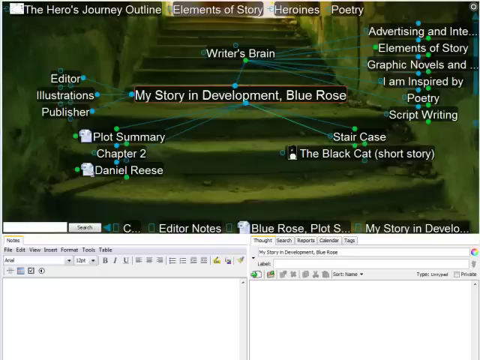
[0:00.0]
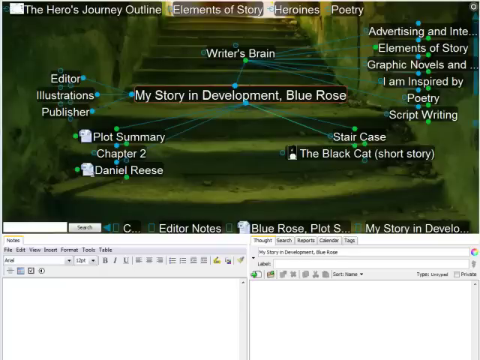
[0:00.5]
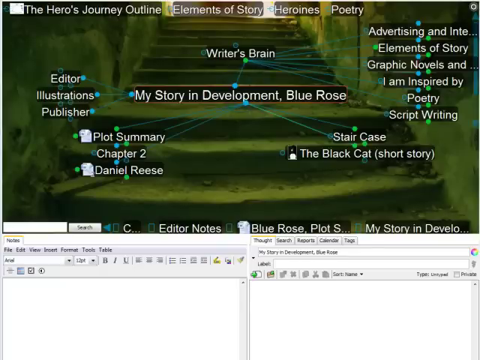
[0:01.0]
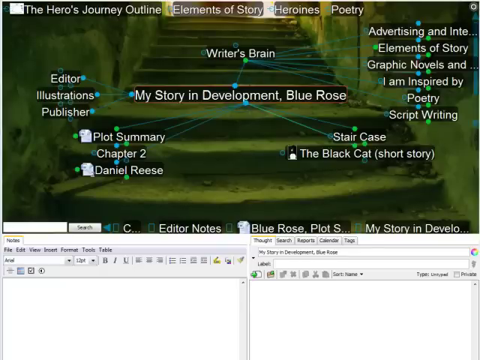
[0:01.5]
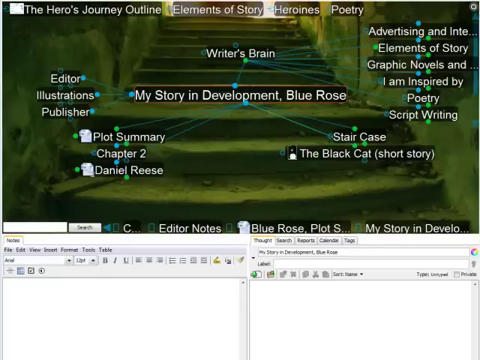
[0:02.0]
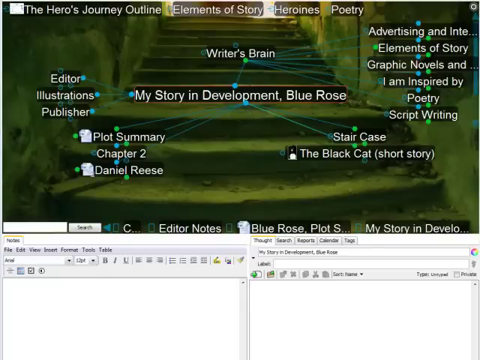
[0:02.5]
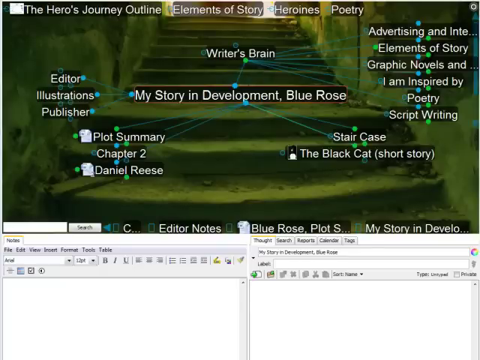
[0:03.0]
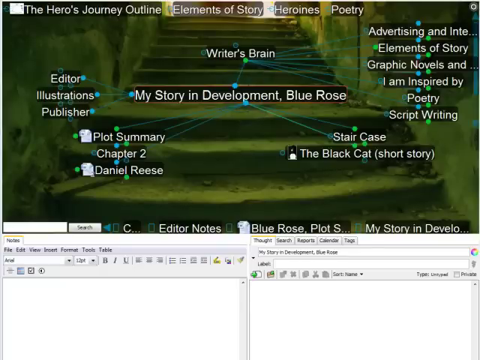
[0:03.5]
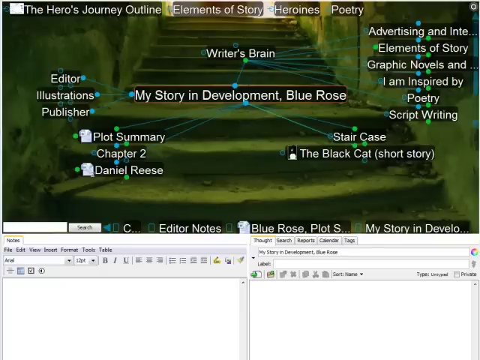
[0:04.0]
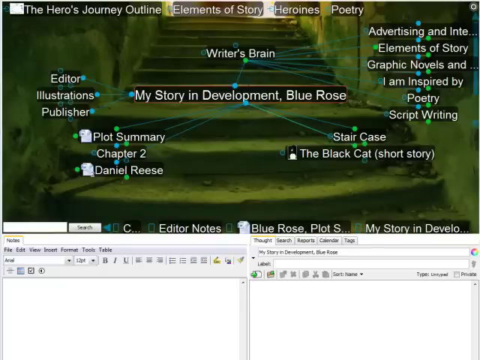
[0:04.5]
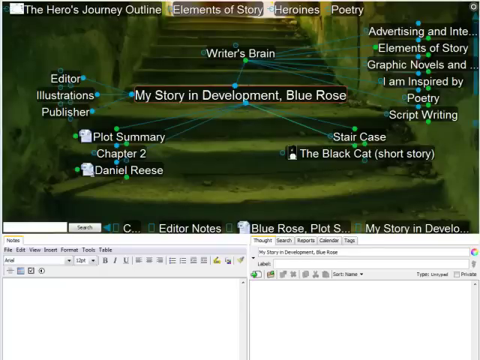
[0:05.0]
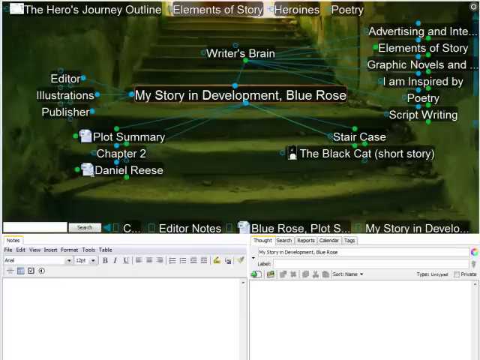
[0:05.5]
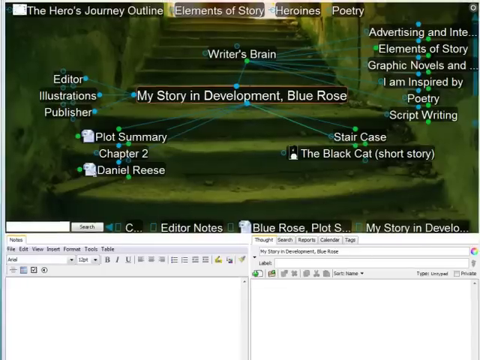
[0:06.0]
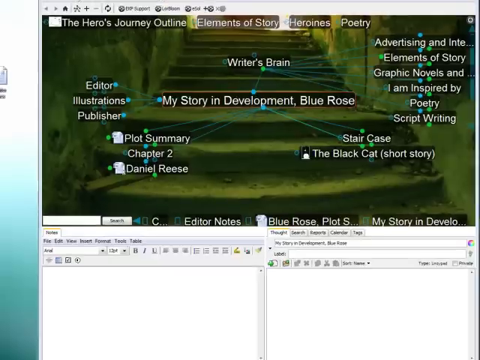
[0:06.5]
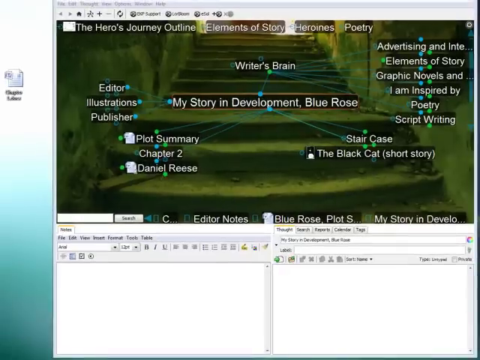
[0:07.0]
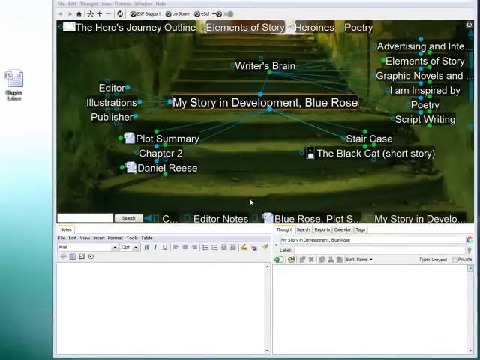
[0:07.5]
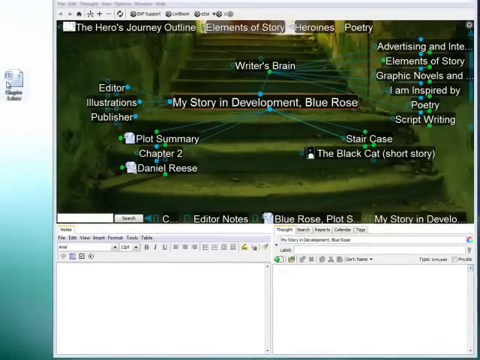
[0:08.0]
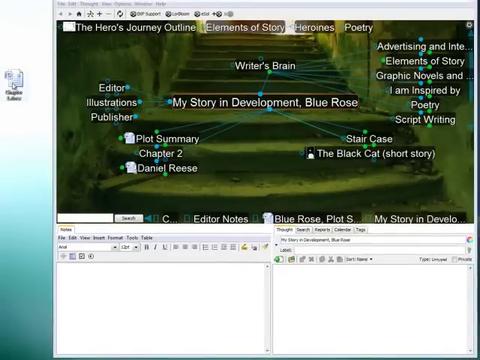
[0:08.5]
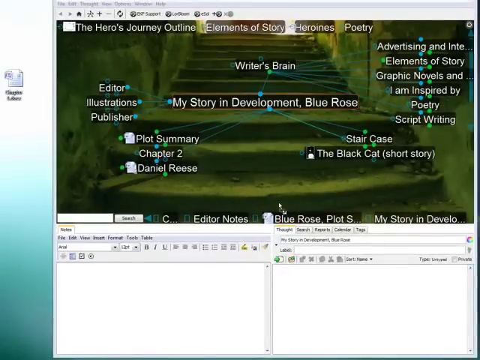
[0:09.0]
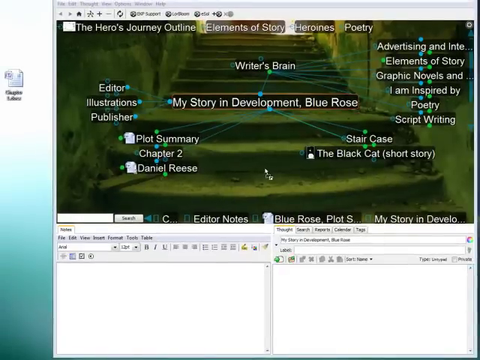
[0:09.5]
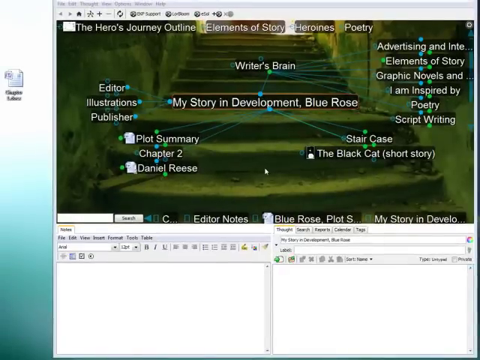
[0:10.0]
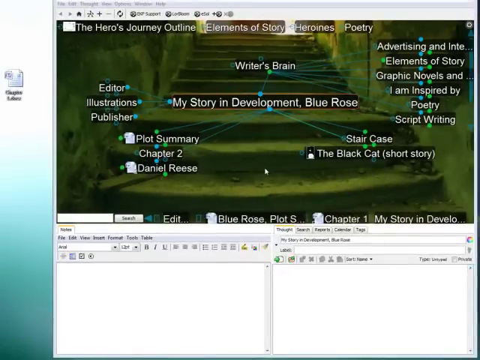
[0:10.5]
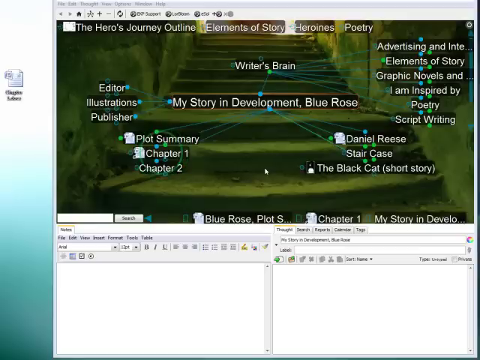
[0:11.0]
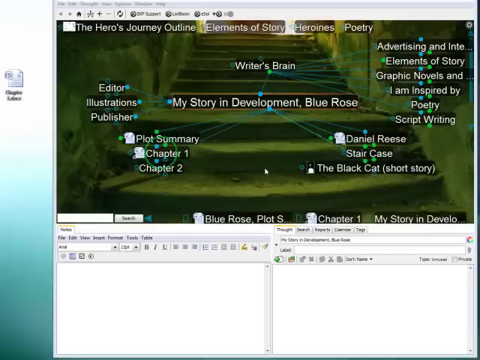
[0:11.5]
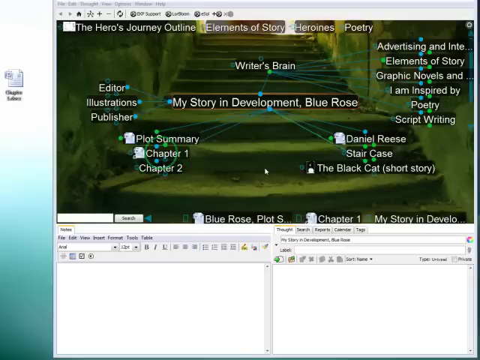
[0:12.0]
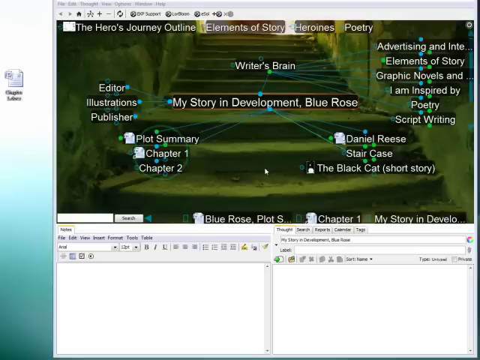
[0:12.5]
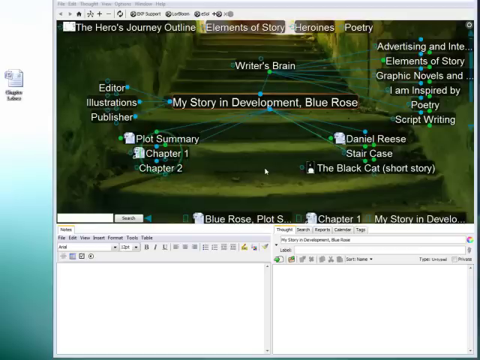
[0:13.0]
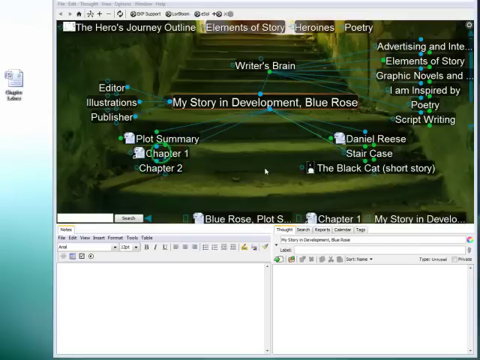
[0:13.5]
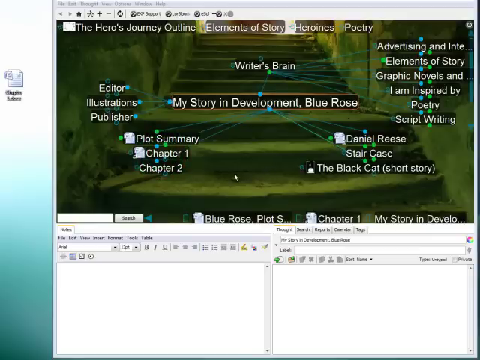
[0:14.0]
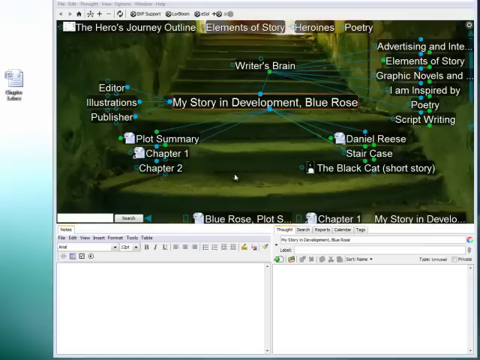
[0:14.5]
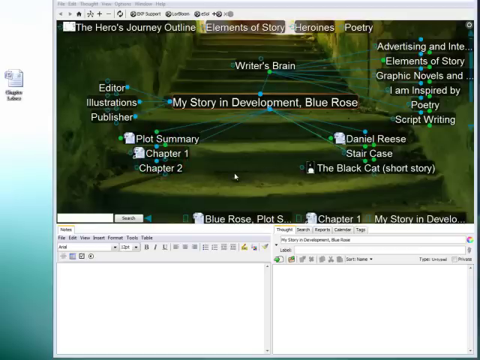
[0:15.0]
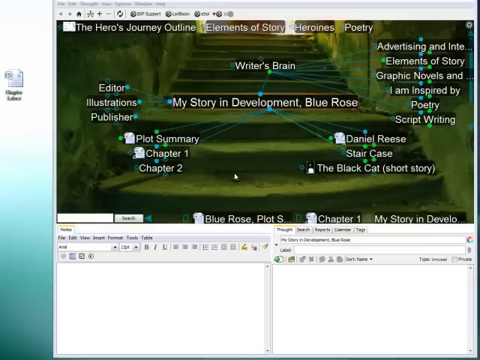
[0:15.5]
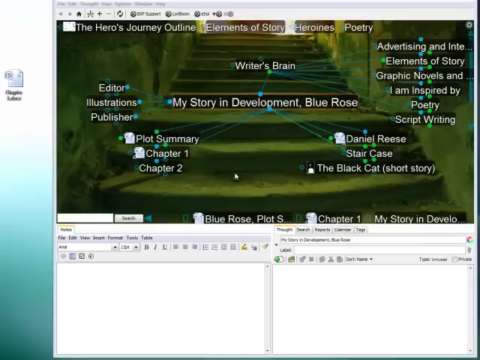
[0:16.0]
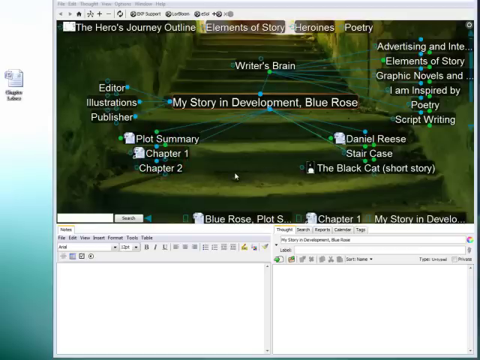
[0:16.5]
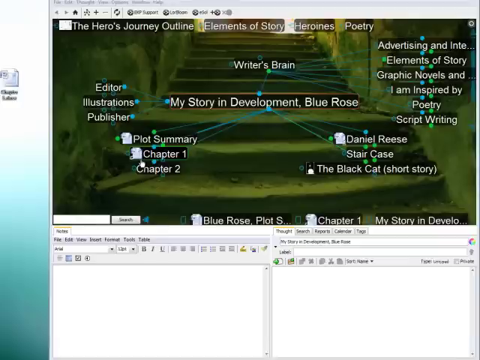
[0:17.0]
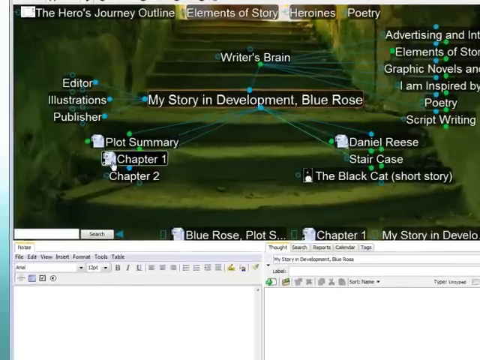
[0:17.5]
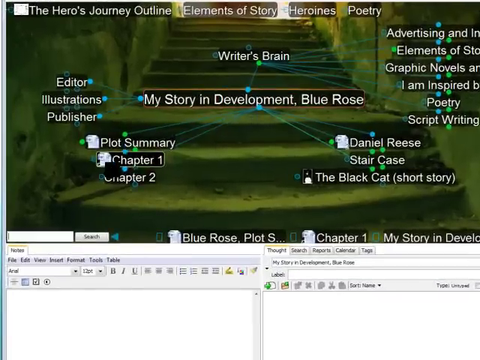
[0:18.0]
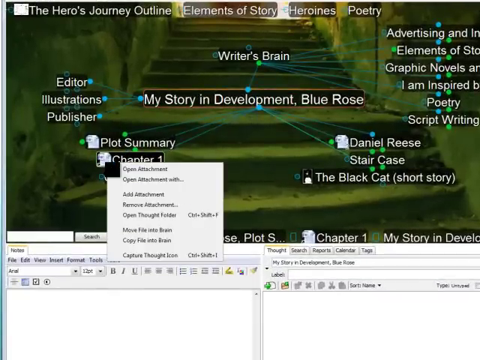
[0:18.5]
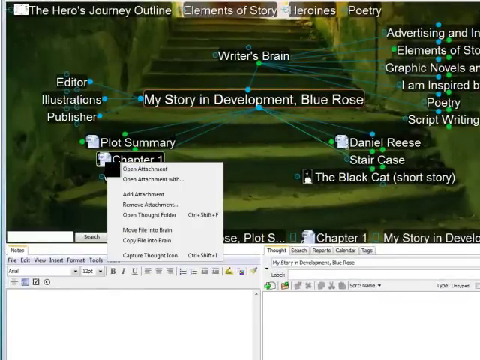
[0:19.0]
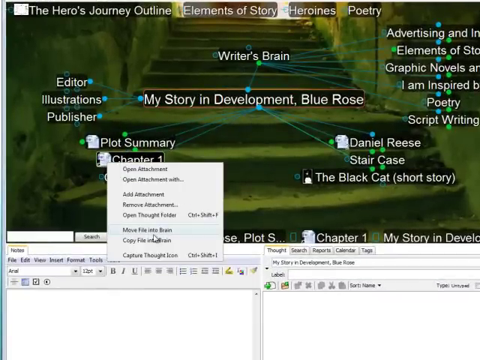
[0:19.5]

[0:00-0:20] Various words and names appear on screen, including "poetry" and "writer's brain", along with points and arrows, each with its own definition. There are green stairs. At the bottom are editor's notes and several notepads used for writing, with options to change colors and edit. The view then zooms out, and another document containing many different explanations or words is added to the page.